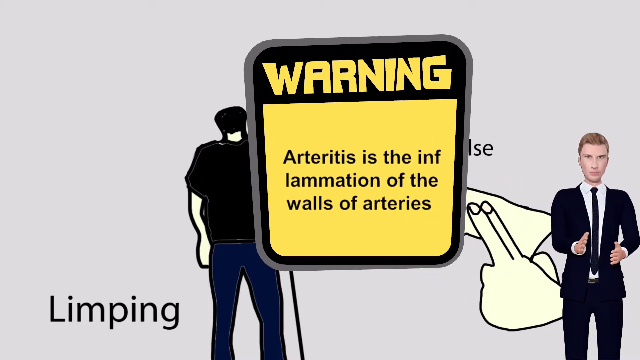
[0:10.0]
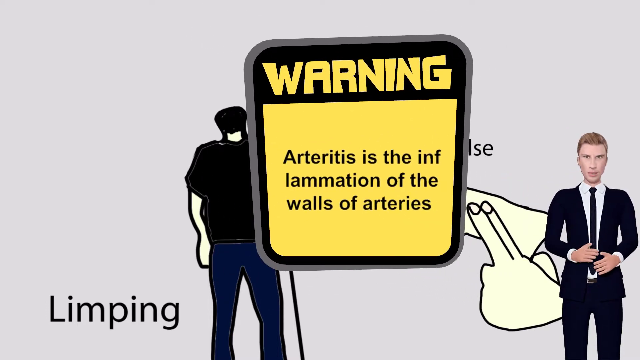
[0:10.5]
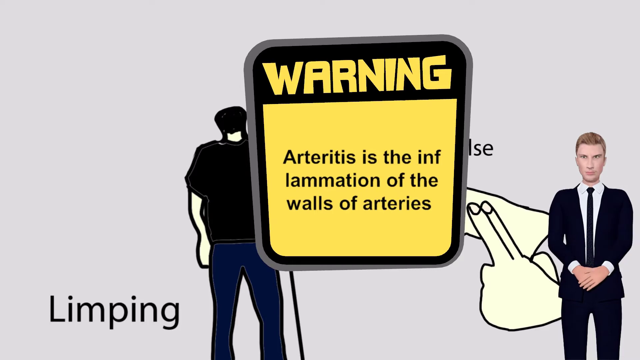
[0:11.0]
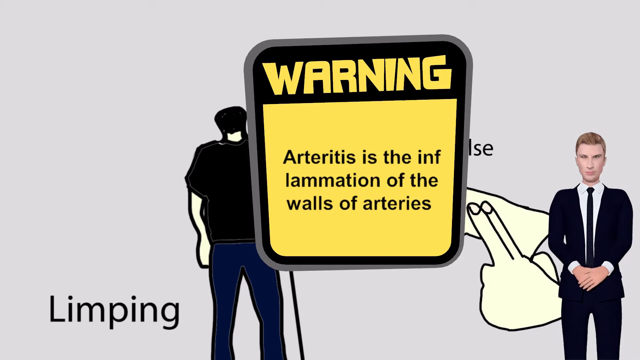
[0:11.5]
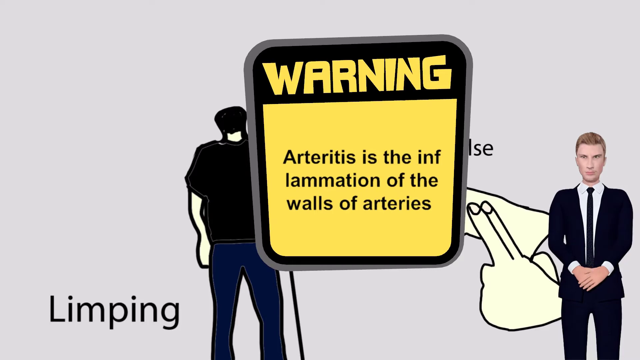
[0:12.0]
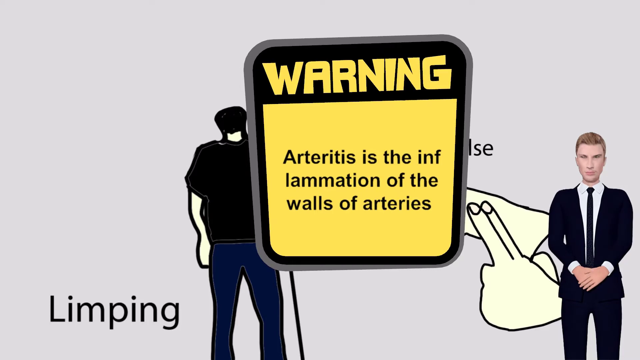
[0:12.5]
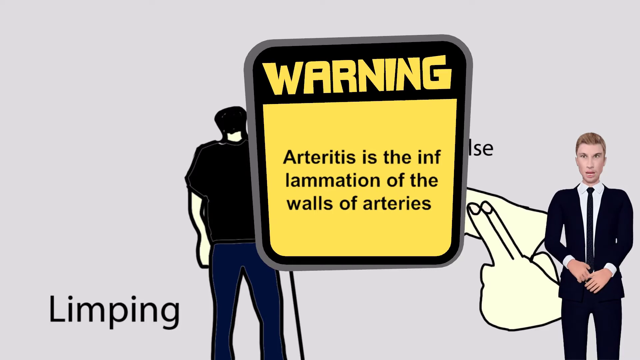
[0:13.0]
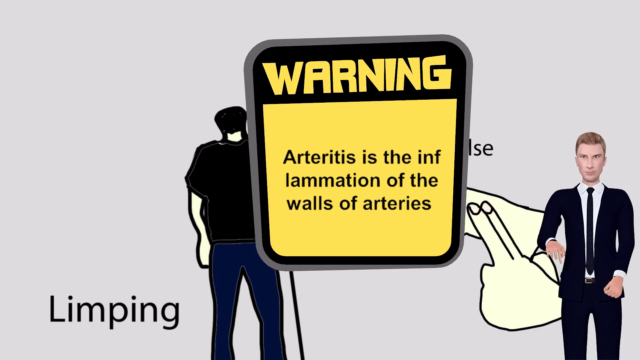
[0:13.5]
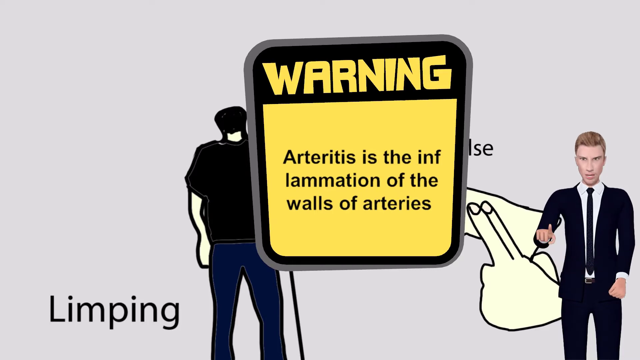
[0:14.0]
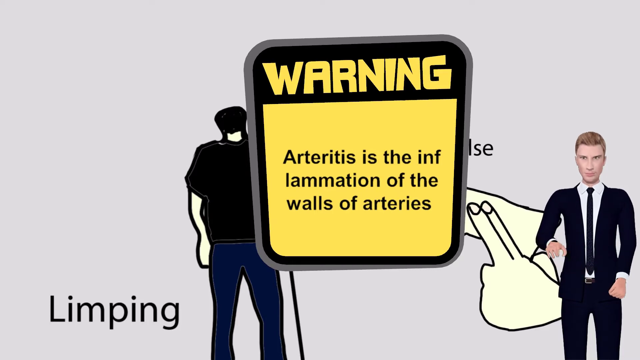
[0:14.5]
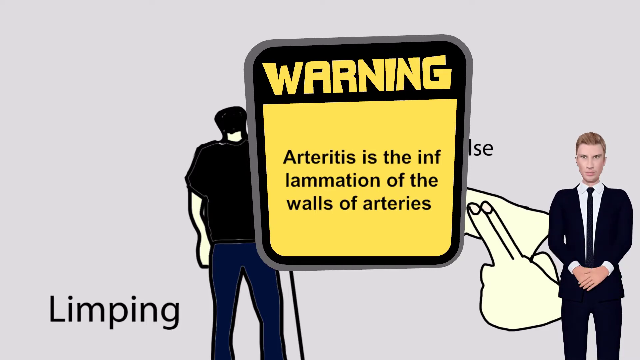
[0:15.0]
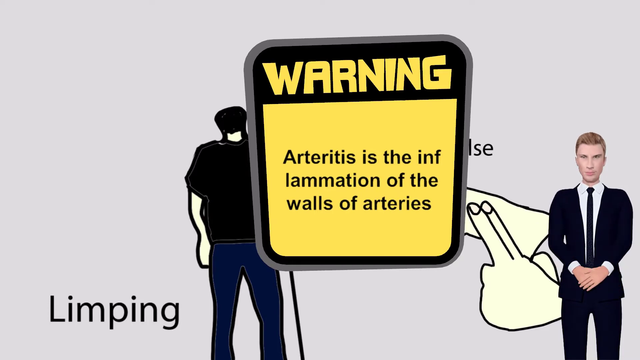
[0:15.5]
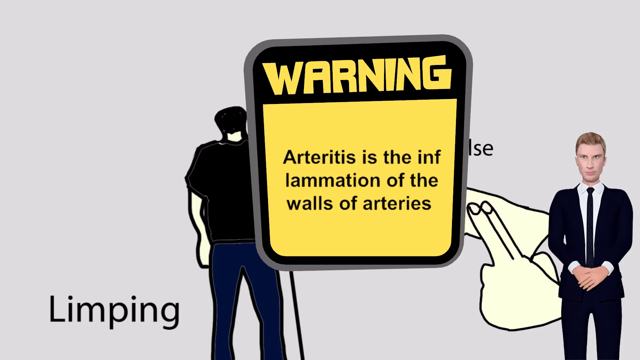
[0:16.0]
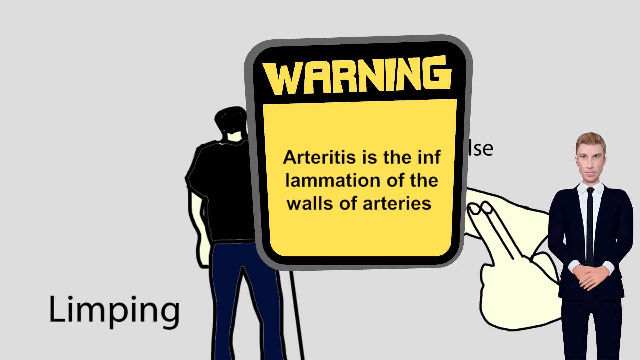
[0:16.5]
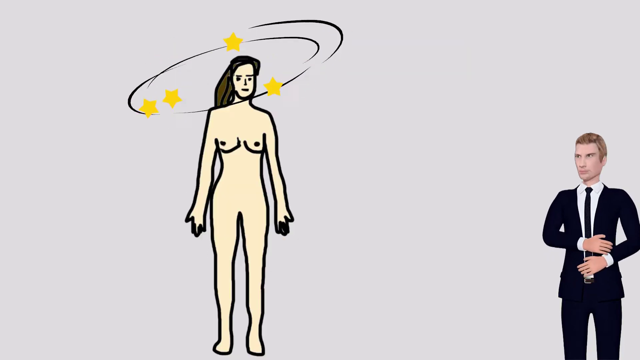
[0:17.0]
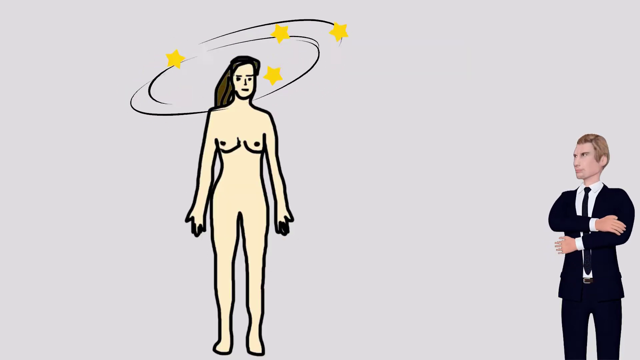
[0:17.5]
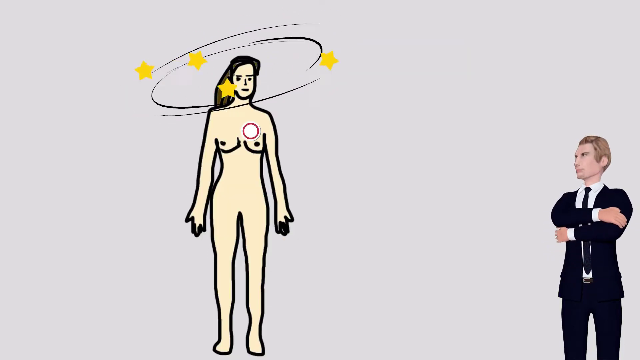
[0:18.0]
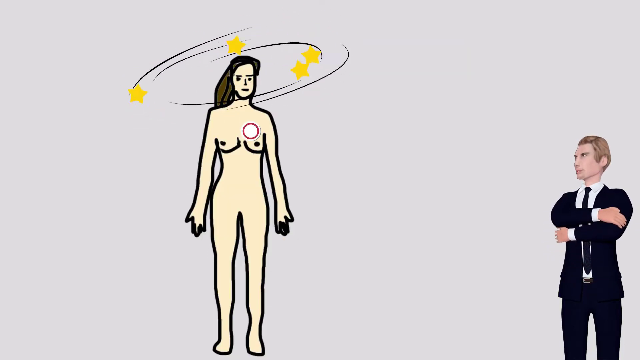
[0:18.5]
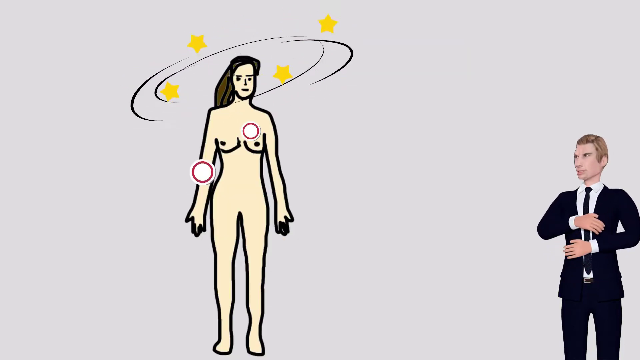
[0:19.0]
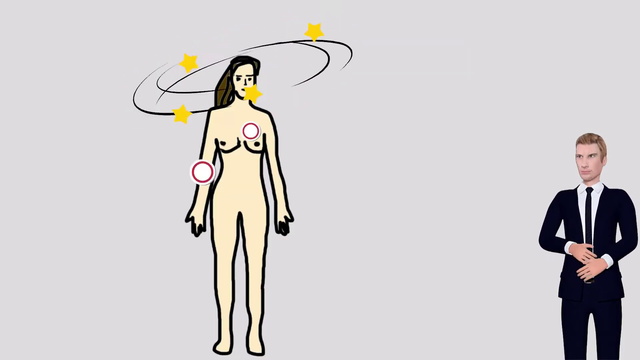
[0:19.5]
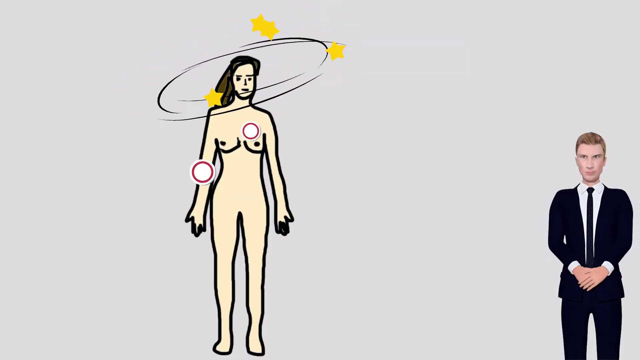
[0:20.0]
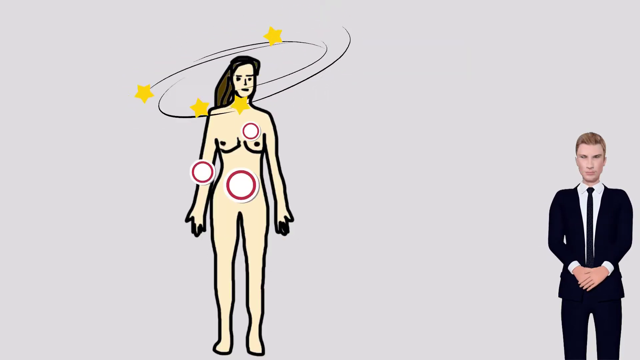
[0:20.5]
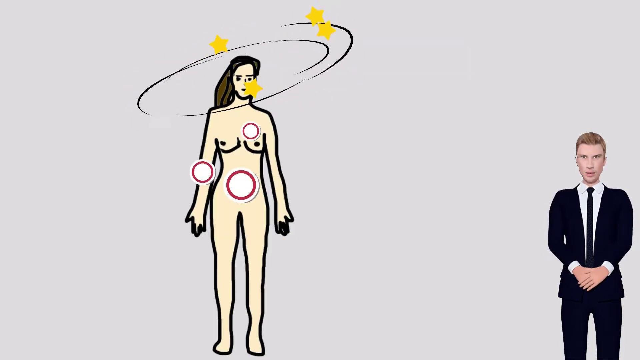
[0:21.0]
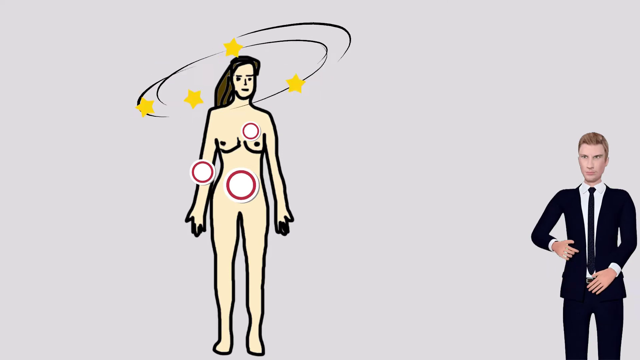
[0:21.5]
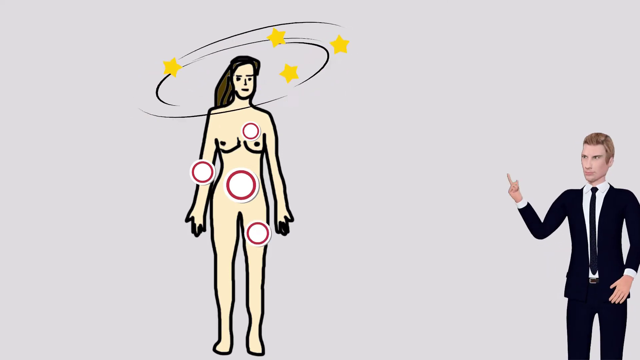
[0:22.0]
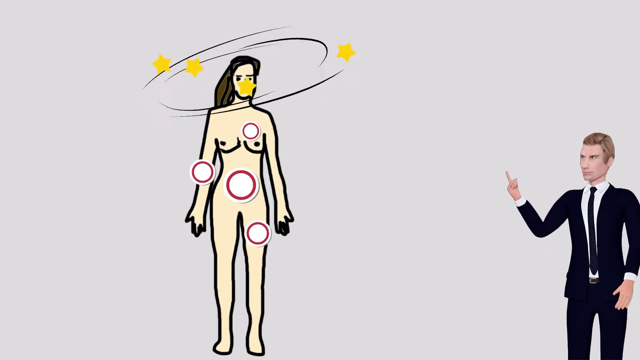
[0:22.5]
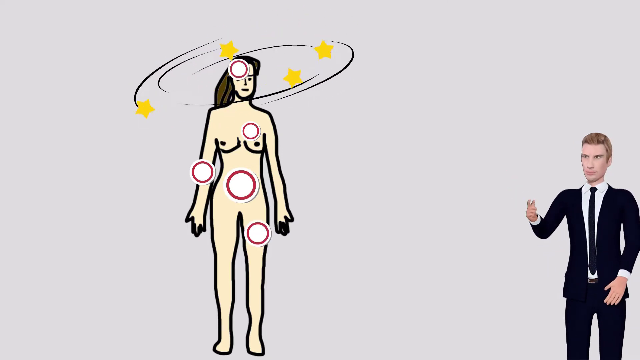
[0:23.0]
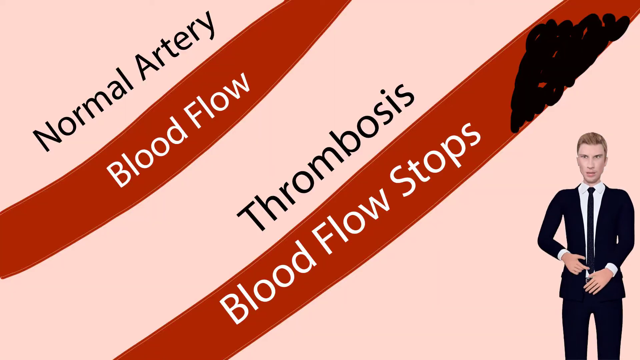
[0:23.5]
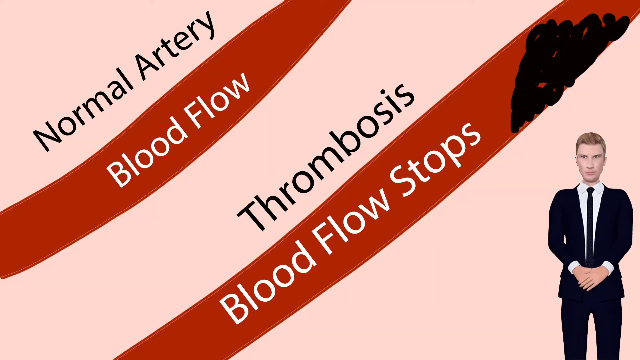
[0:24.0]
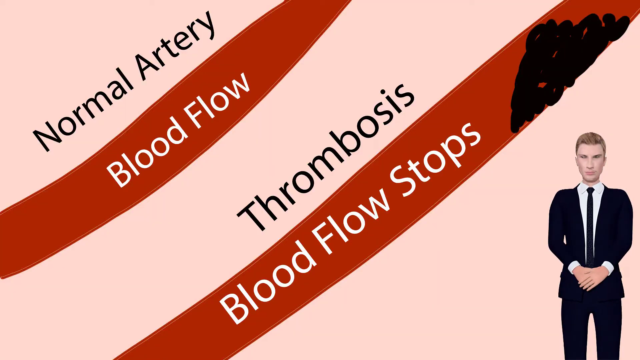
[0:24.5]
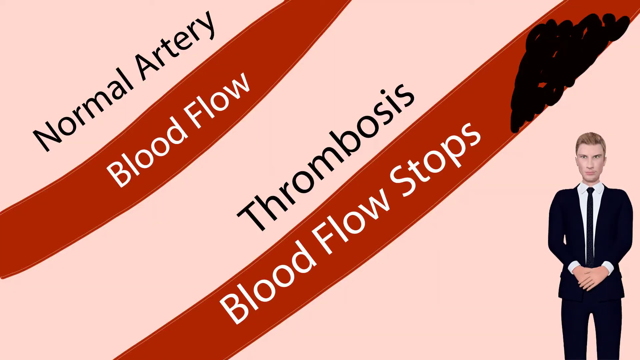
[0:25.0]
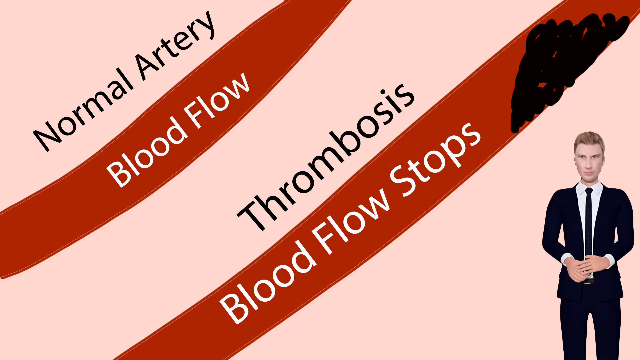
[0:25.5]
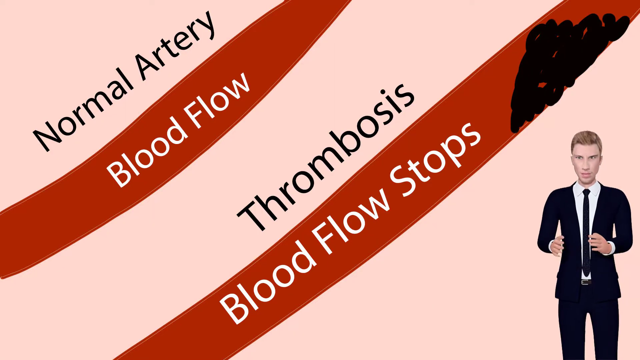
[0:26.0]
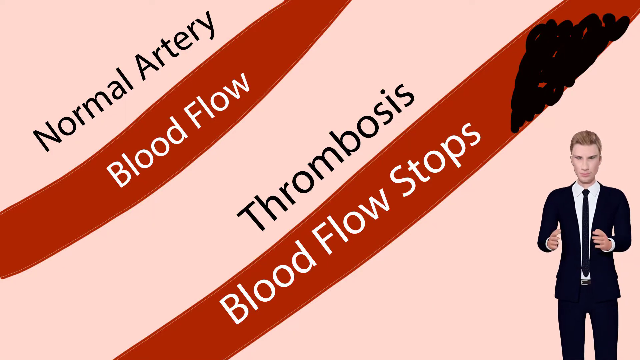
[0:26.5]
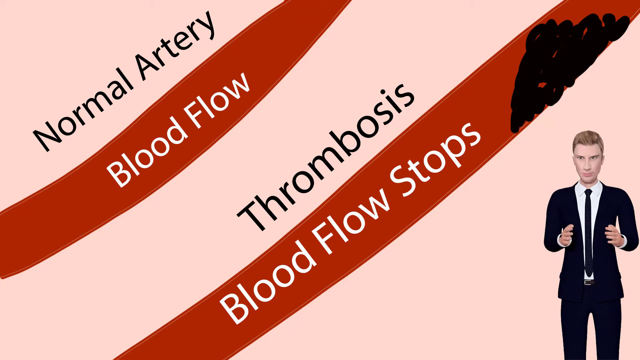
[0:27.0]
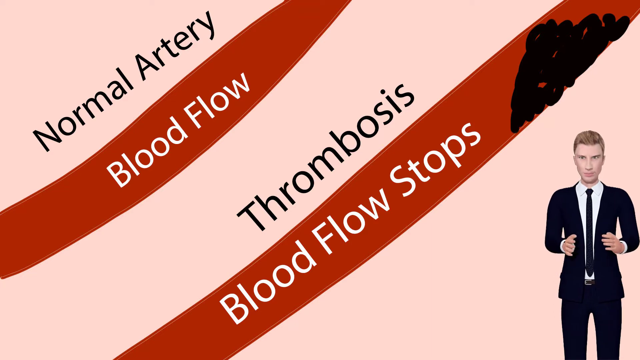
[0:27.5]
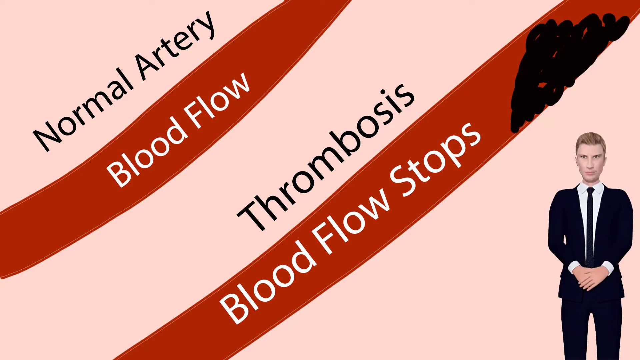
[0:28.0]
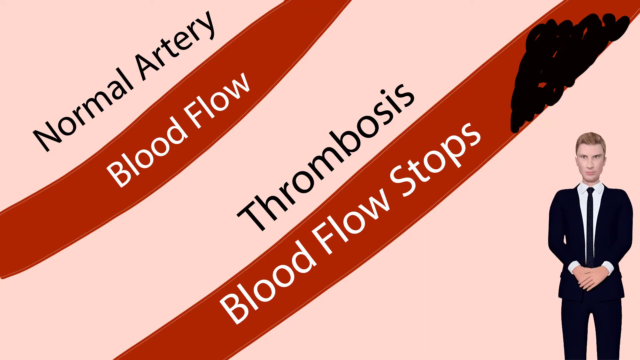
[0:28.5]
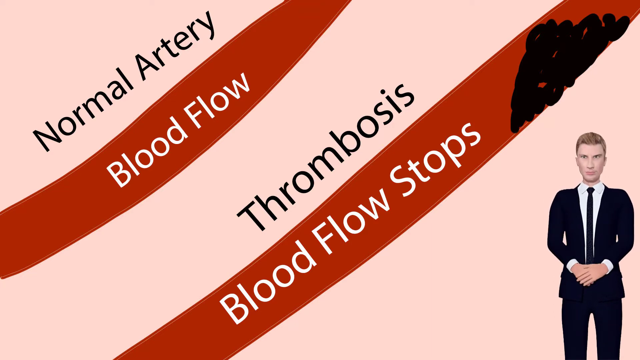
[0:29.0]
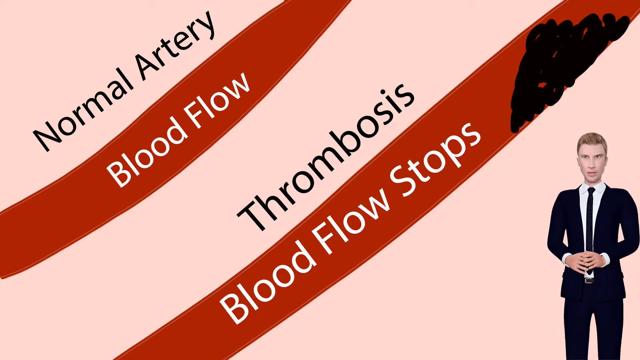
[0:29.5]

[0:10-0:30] On-screen text begins "warning" and mentions inflammation through the arteries, while a cartoon man is shown limping. Next, a naked woman with her breasts exposed appears, and a number of dots are placed on her. Text refers to a normal artery with blood flow, and then "thrombosis" appears with the label "blood flow stopped". A red line with many black dots in it shows the blood flow stopping as the black dots accumulate in the red stream.